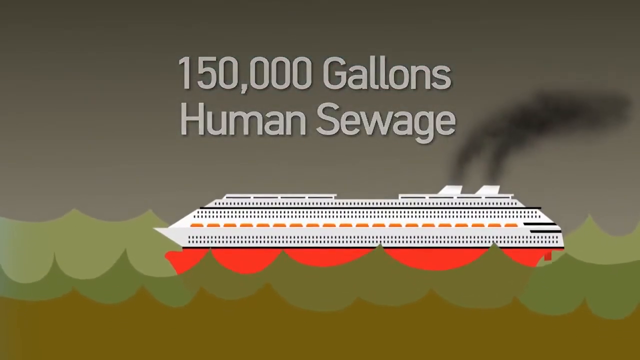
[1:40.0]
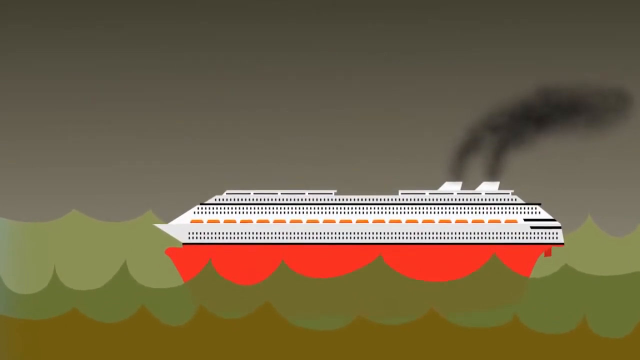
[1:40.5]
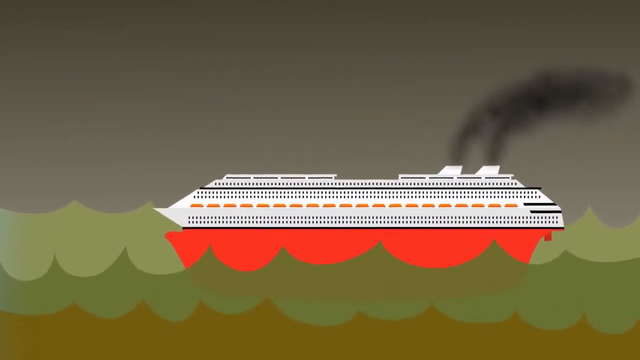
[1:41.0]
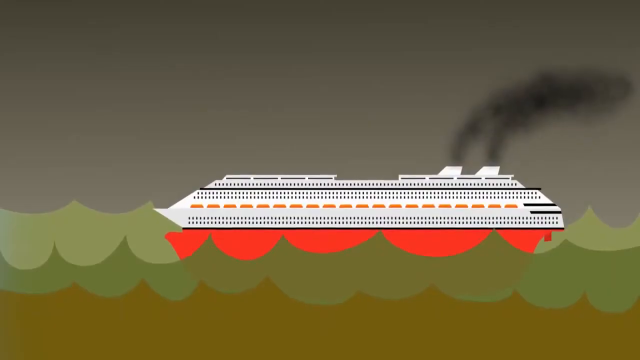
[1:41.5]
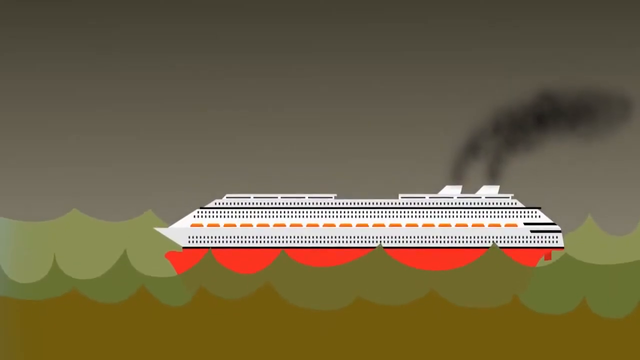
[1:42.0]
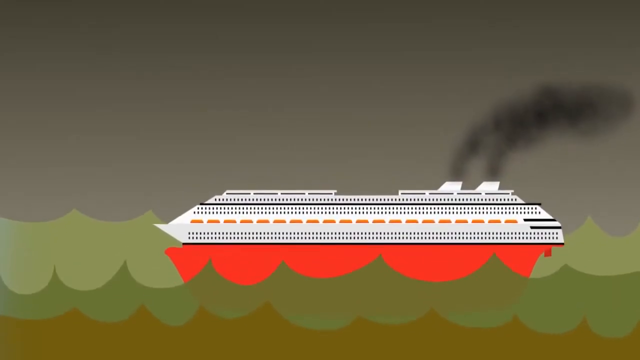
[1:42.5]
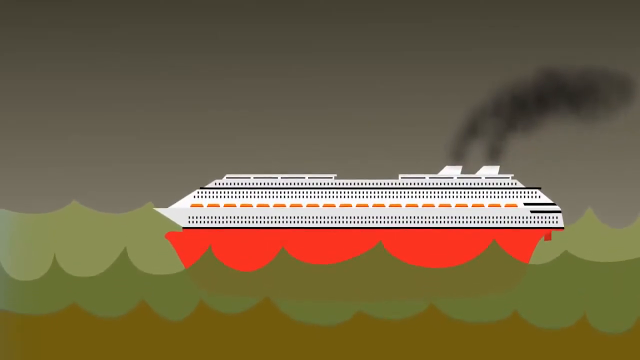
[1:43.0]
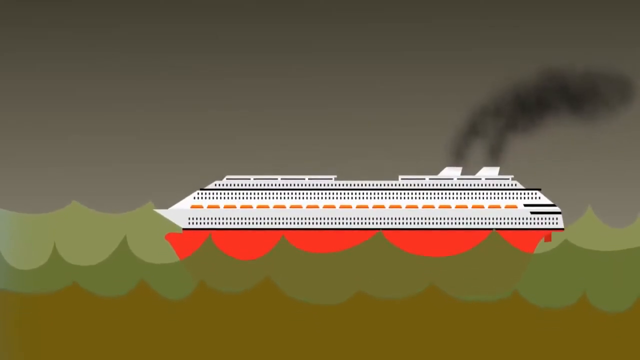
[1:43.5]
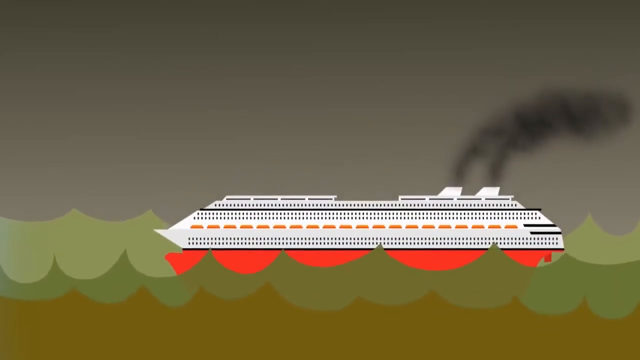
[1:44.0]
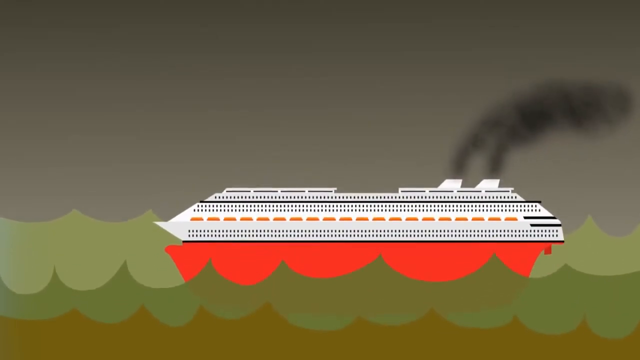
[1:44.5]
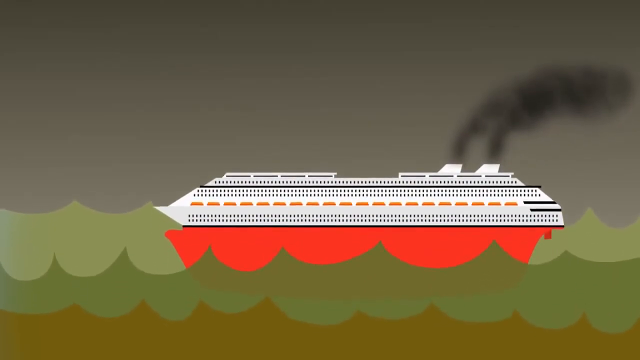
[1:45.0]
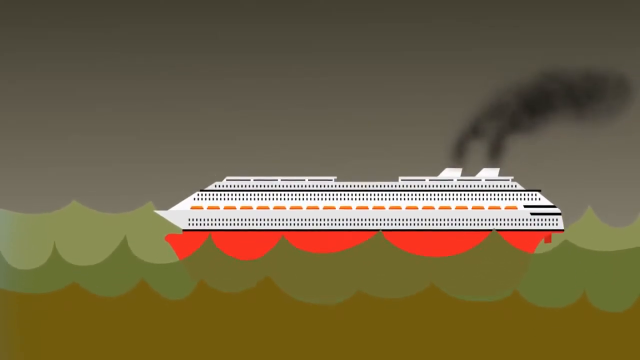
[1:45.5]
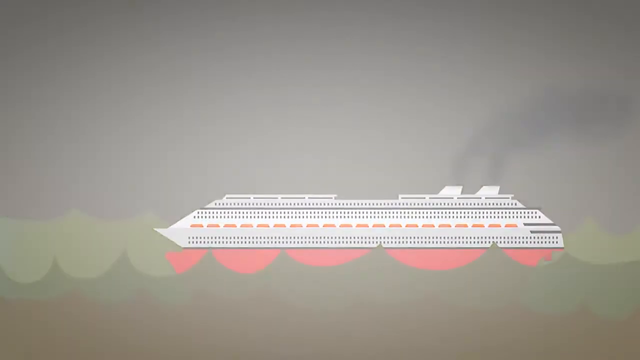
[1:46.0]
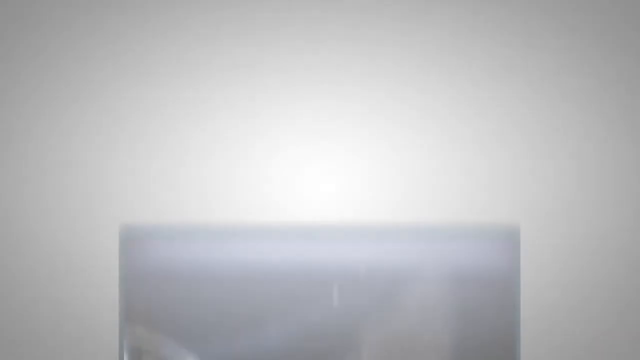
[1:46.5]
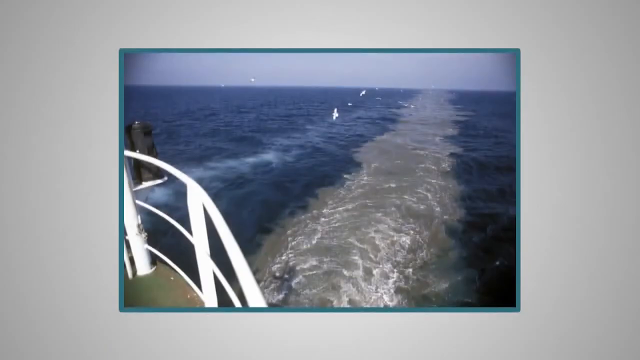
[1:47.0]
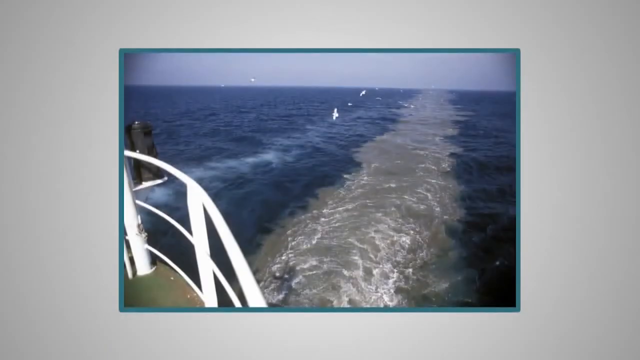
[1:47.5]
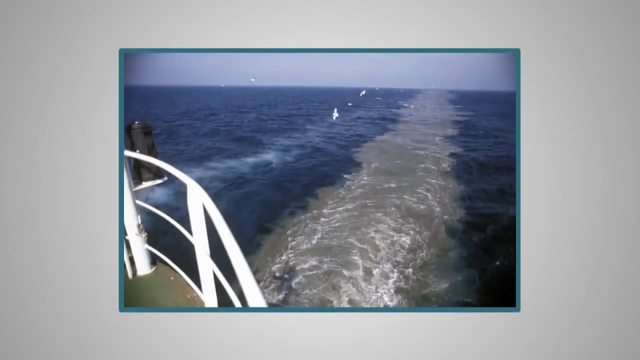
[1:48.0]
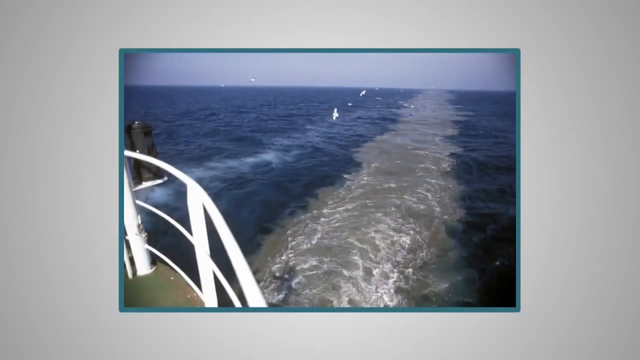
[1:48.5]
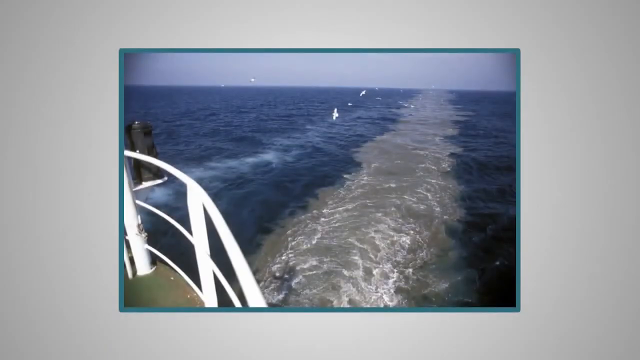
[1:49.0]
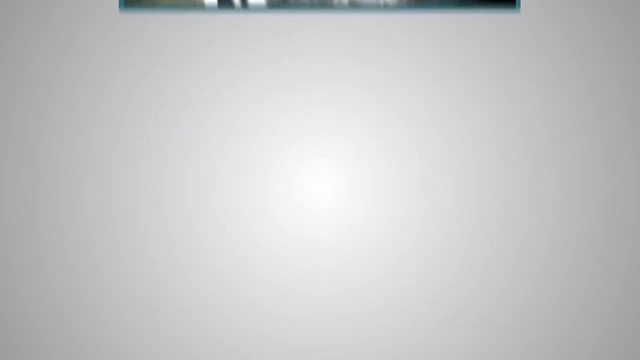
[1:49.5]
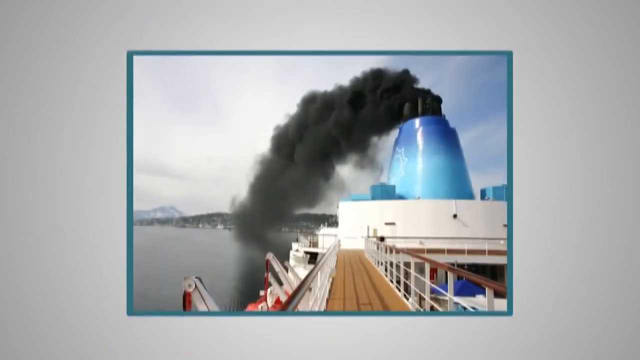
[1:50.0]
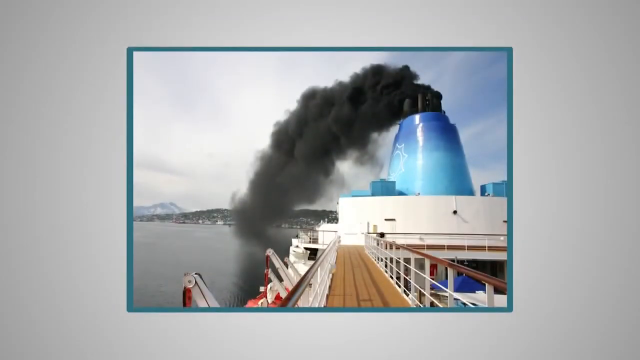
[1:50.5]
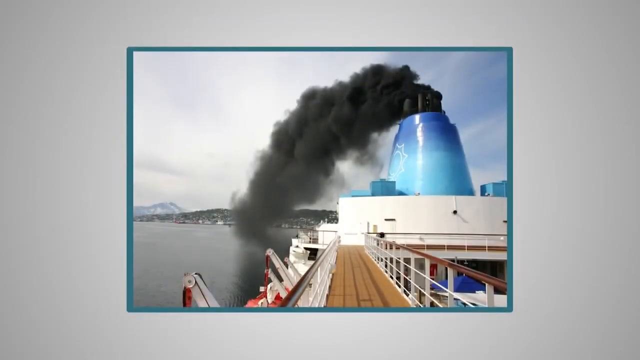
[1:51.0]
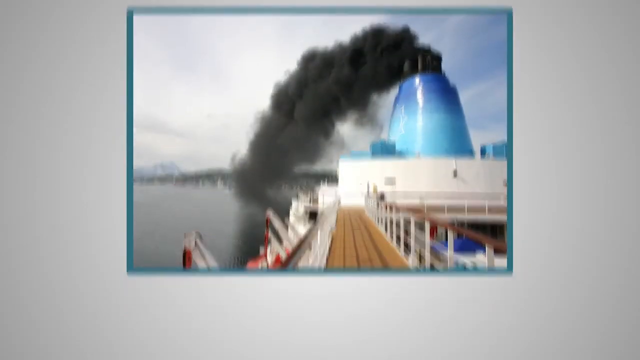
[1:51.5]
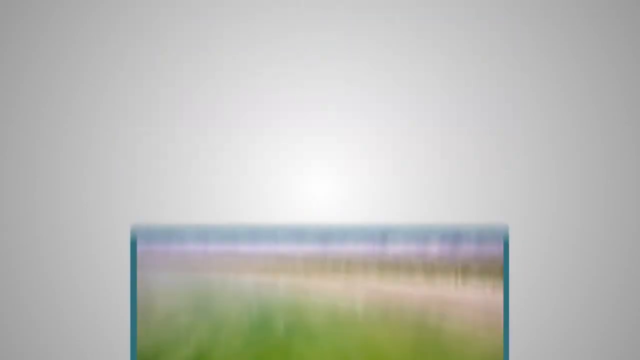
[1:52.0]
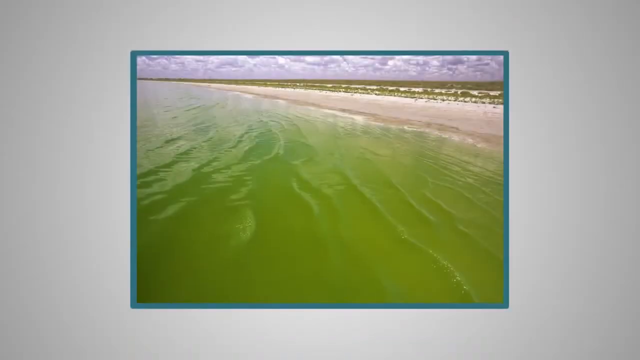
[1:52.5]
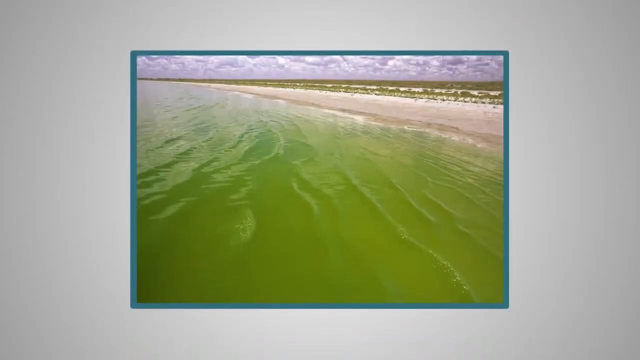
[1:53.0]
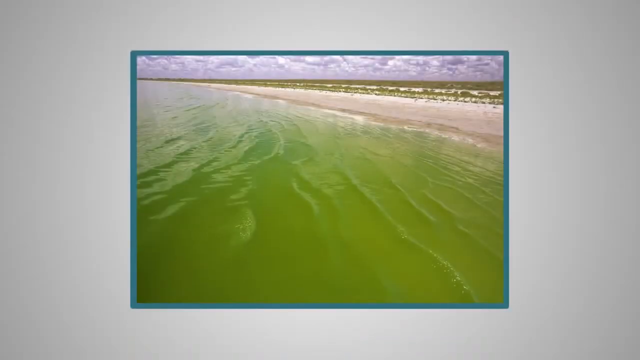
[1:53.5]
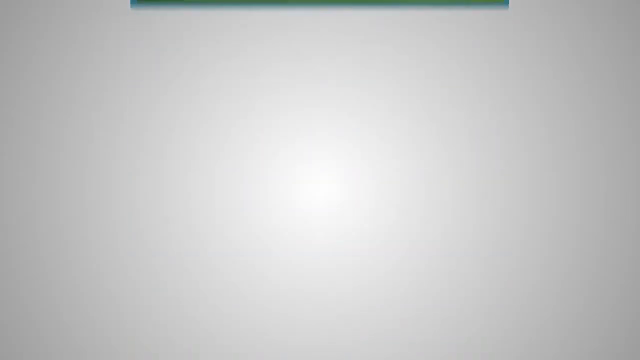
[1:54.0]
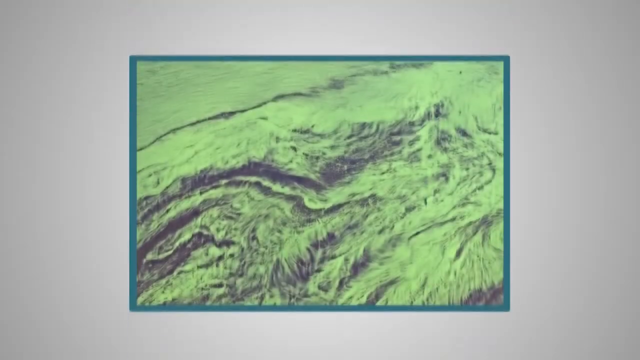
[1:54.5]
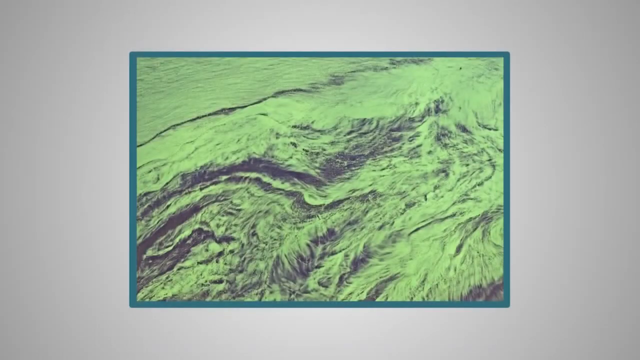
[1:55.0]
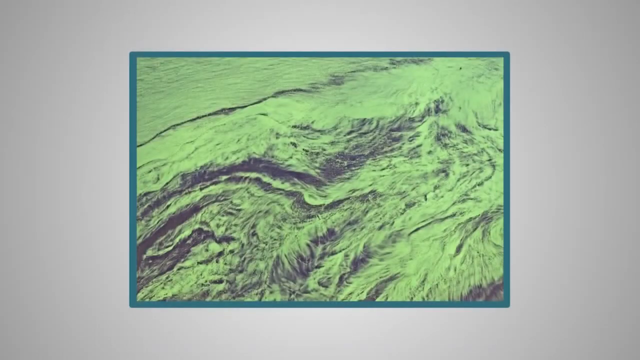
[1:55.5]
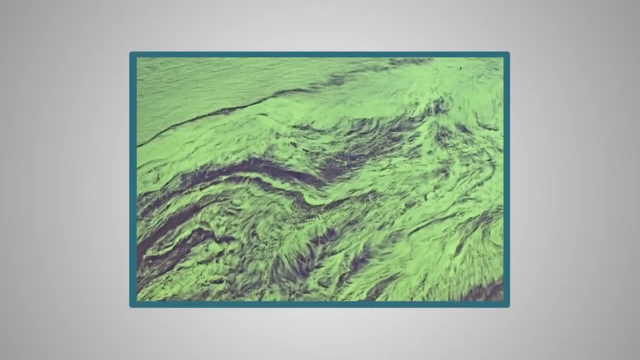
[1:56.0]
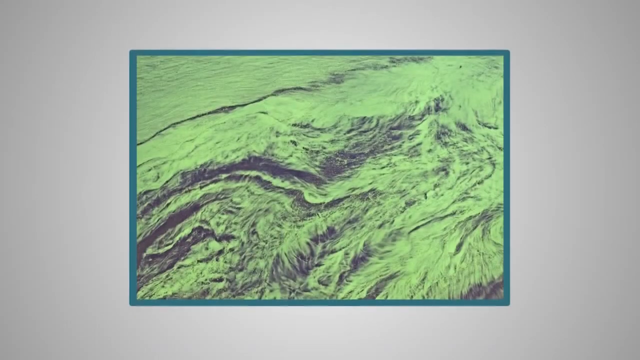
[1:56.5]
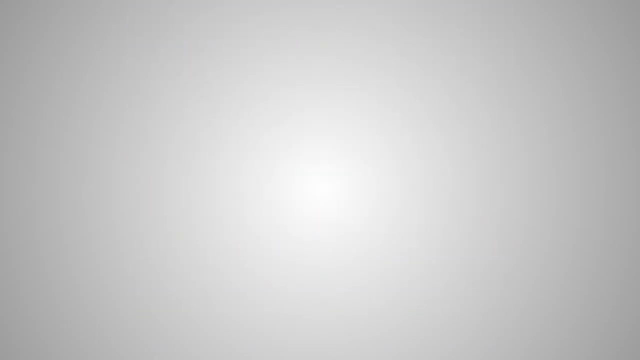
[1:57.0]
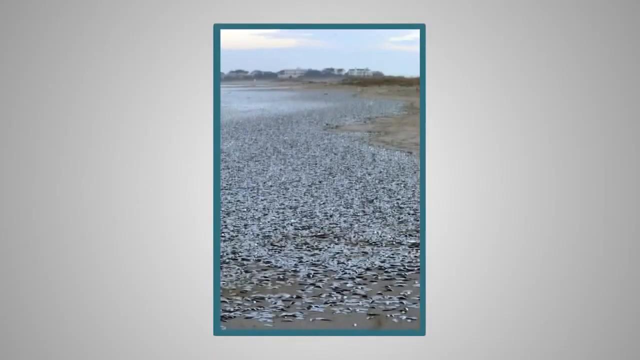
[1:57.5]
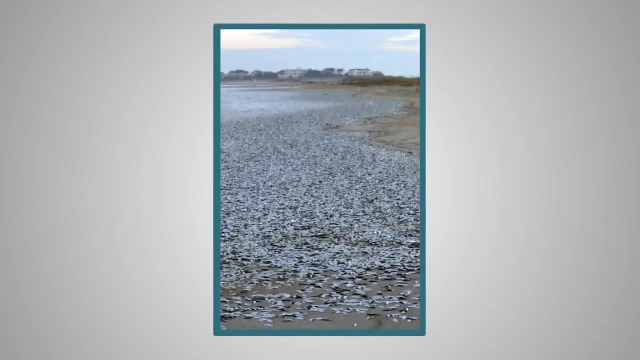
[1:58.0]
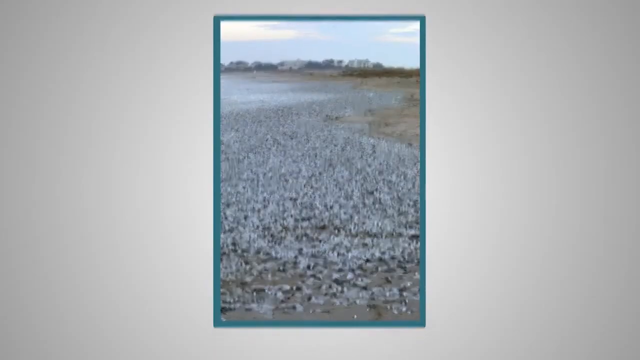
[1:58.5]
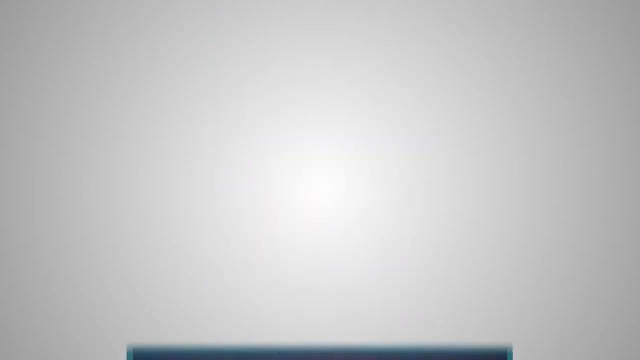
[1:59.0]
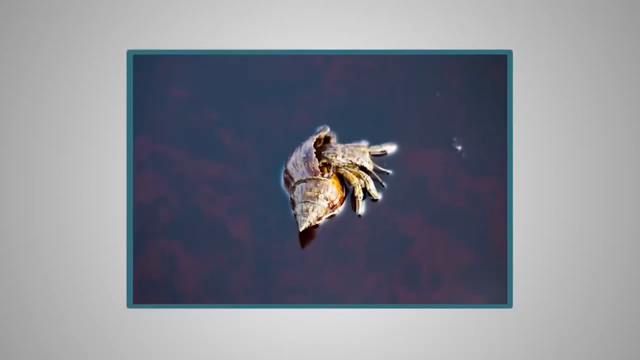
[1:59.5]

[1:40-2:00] A still picture appears to show sewage being spilled into the water from the back of a cruise ship; mostly a white railing is visible, with dirty water on the ocean. A close-up follows of a blue and teal smokestack on a cruise ship with very heavy black smoke coming out of it. Next is a graphic of a beach with green water that looks a little unnatural, with some sand in the background. Then comes what looks like a close-up of swirling water in white and black, hard to make out, almost like an illustration. A picture shows something black washed up on a beach, possibly black shells, that does not look natural and almost looks like oil on the coastline. A close-up picture shows a crab in a shell that looks dead, floating on dirty, oily water.